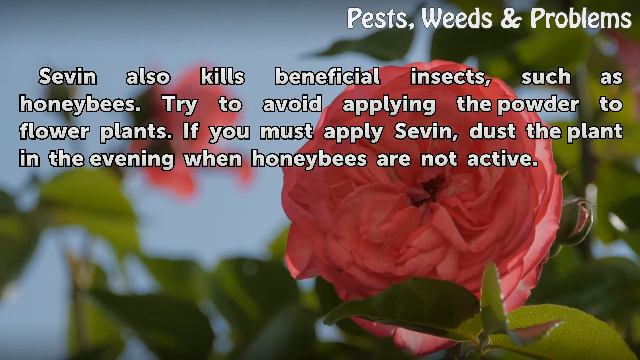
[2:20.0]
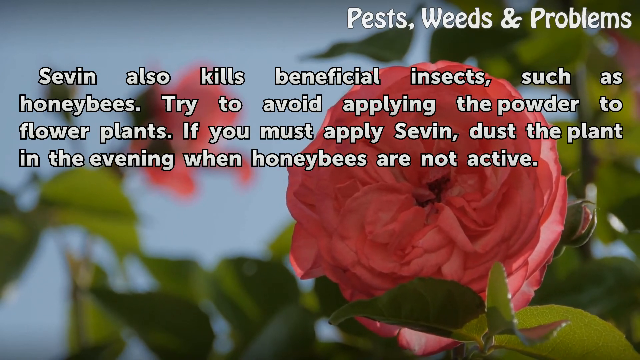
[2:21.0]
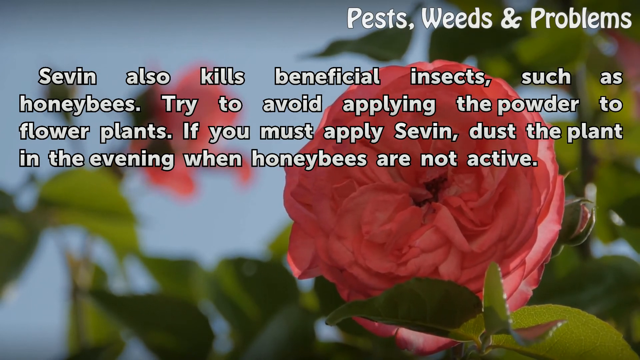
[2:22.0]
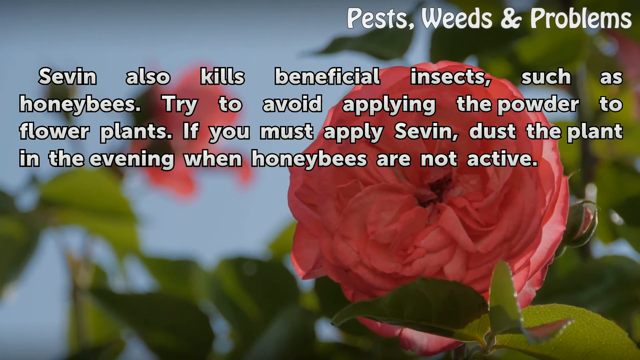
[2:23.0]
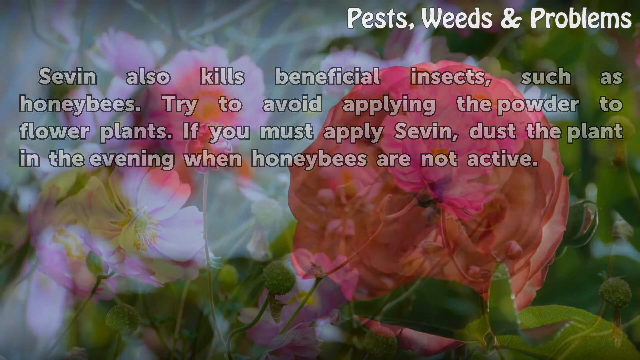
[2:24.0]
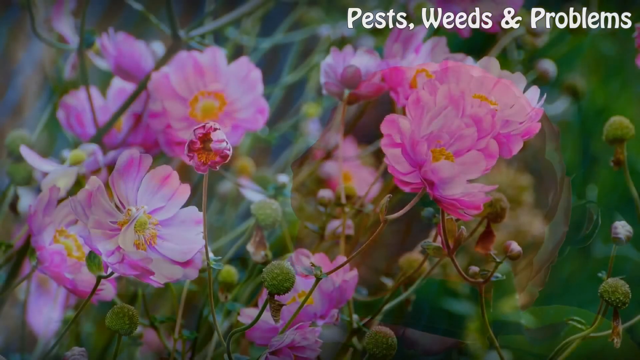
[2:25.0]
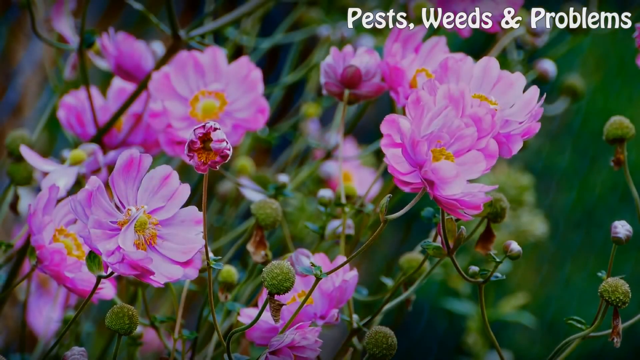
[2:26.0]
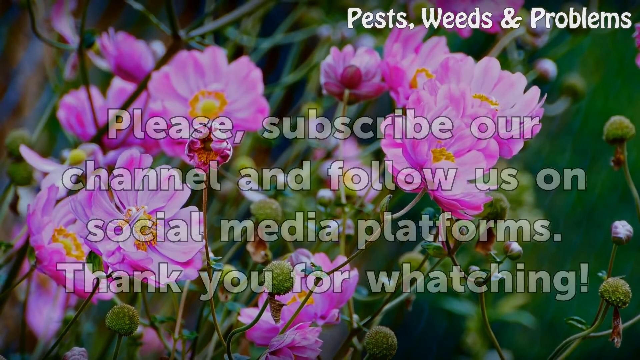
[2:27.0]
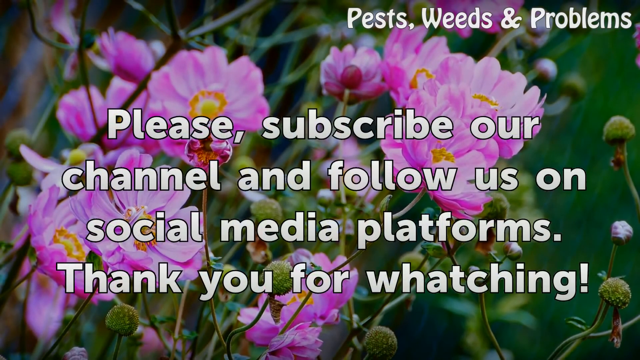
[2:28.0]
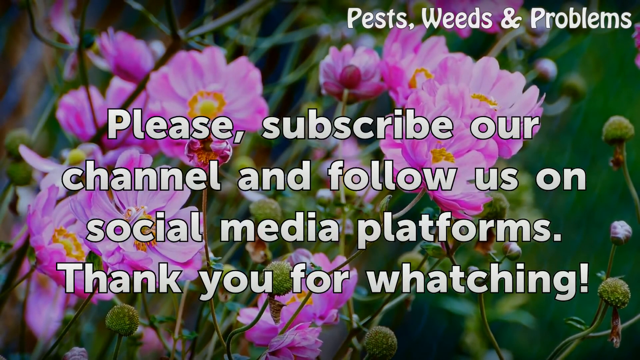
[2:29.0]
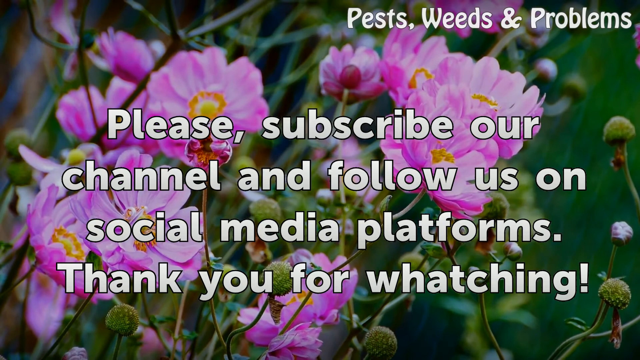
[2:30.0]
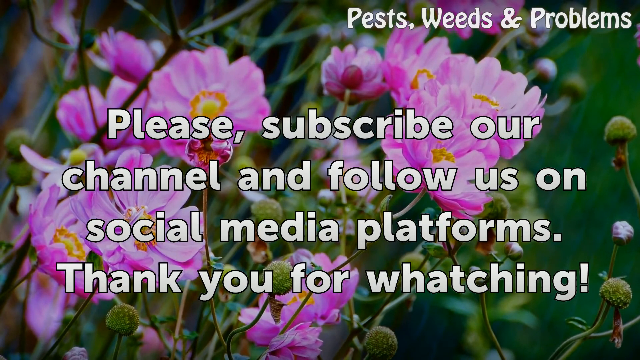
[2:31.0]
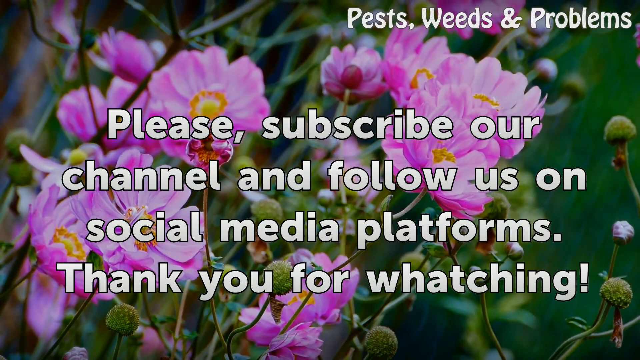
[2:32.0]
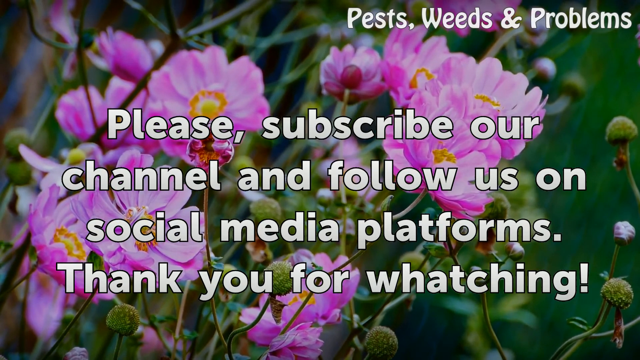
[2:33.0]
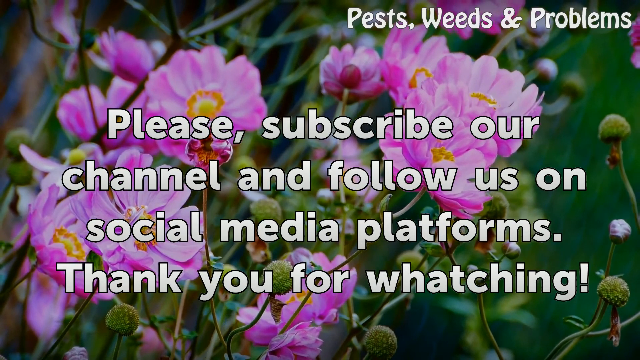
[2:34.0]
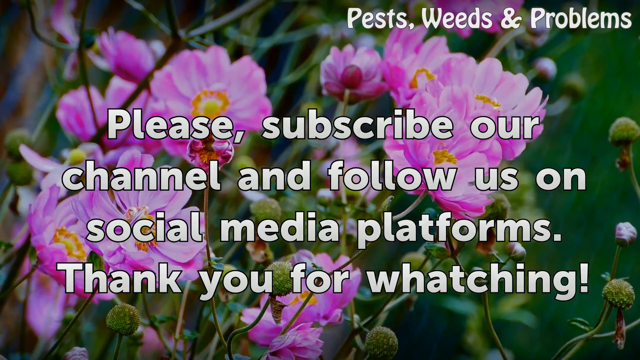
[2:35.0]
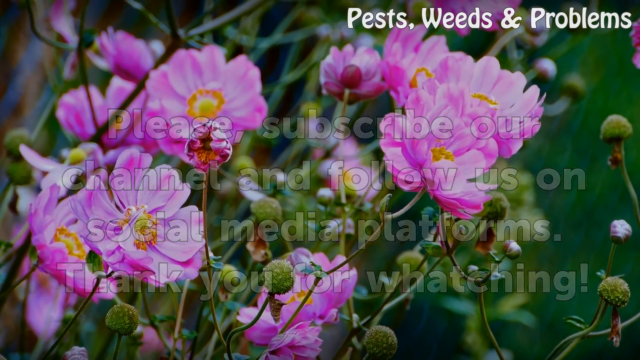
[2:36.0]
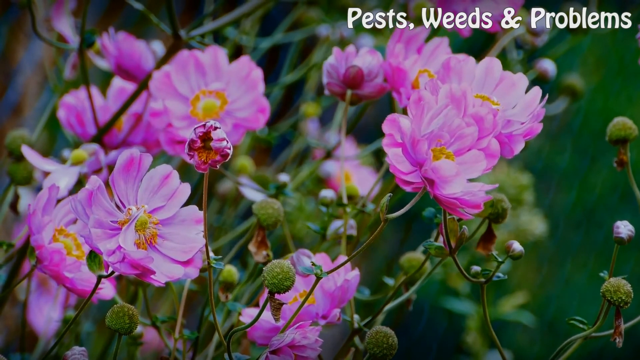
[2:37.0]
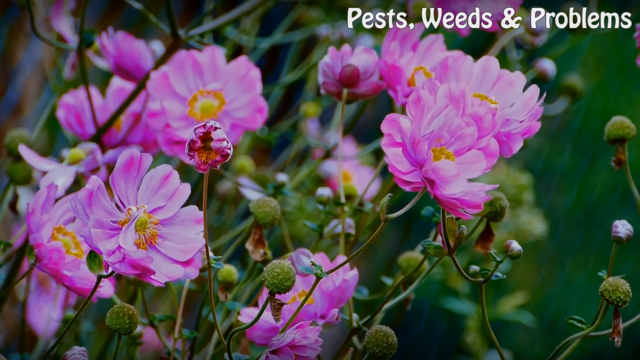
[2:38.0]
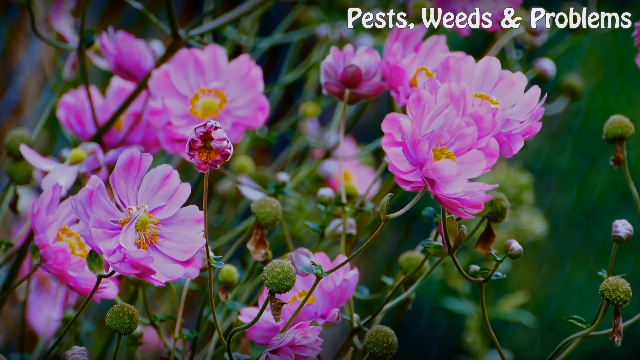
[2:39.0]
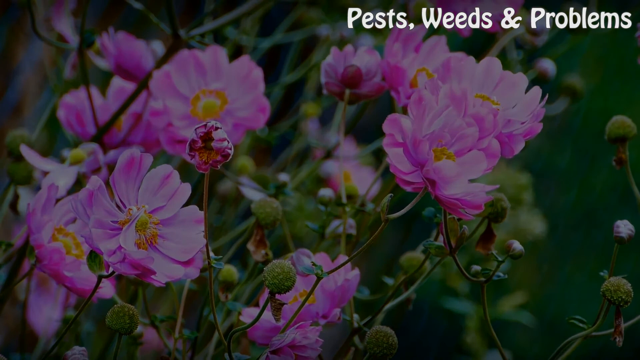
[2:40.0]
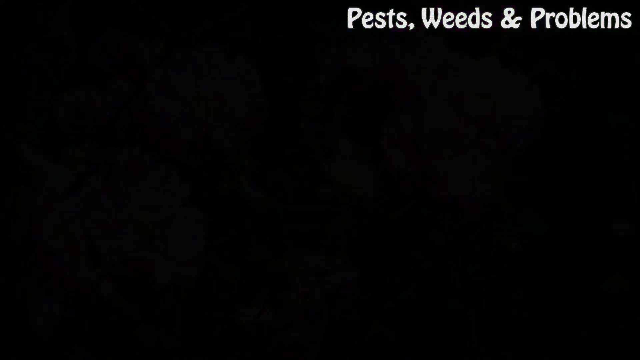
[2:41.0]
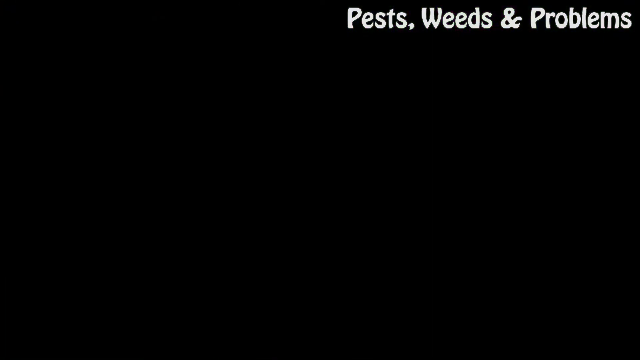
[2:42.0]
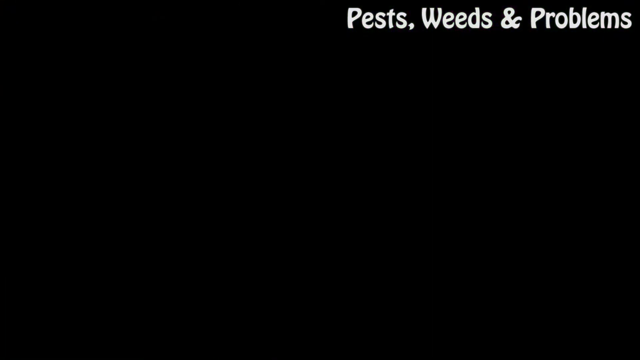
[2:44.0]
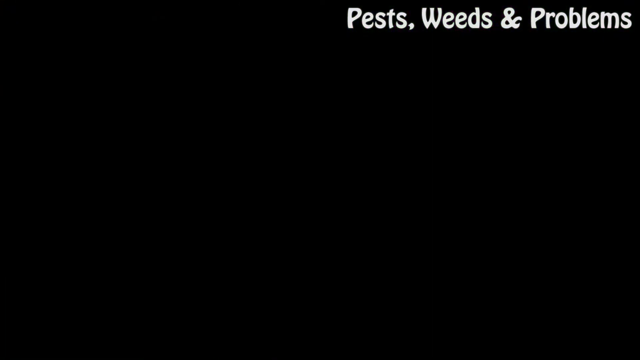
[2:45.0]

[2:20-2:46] The text fades out, revealing a background of pink flowers with yellow centers. More text appears reading "please subscribe our channel and follow us on social media platforms thank you for whatching!", with "watching" misspelt and an exclamation mark at the end. This text fades out, leaving the flowers, and then the picture fades to black. The white text "pests, weeds and problems" in the top right corner stays the same throughout, even as the picture fades to black.